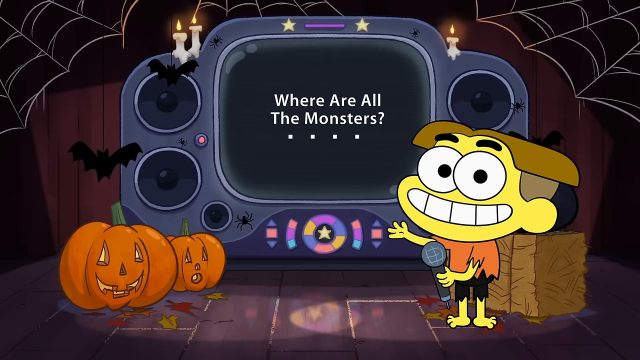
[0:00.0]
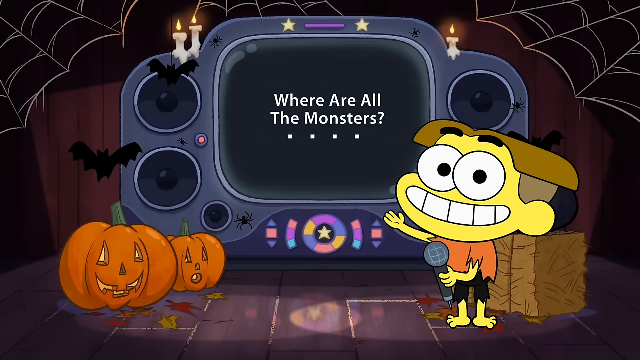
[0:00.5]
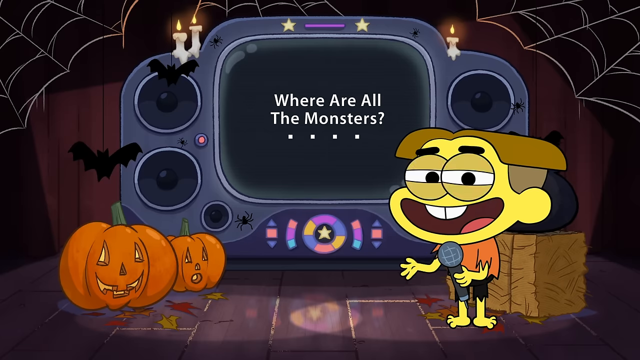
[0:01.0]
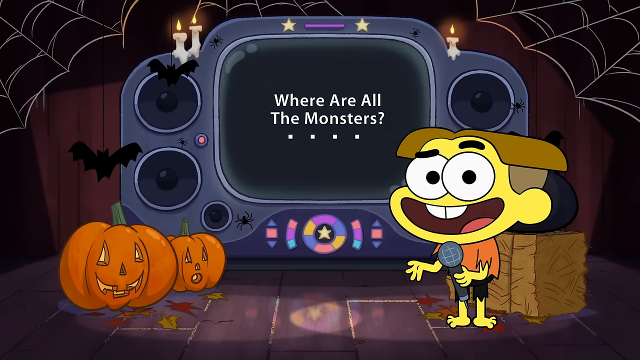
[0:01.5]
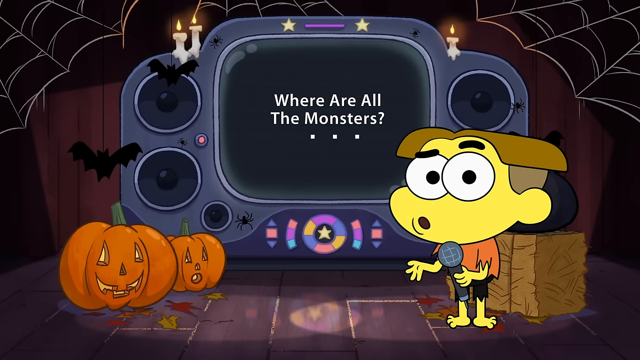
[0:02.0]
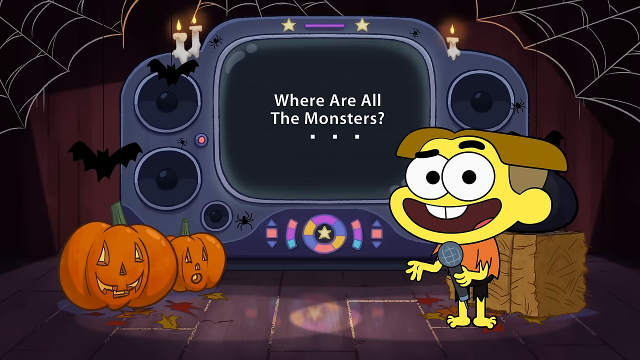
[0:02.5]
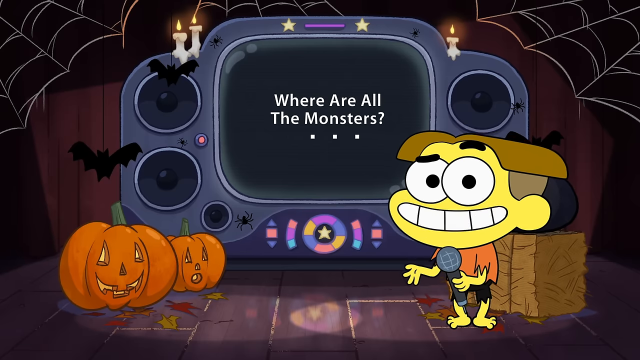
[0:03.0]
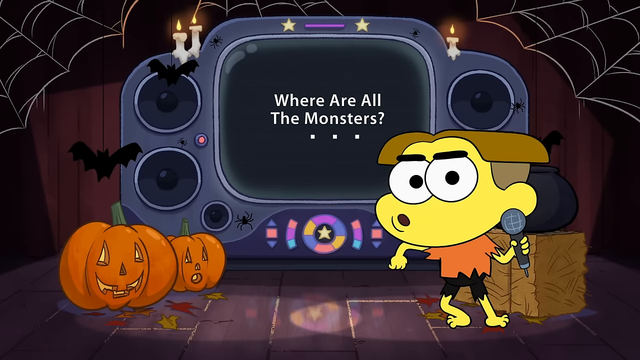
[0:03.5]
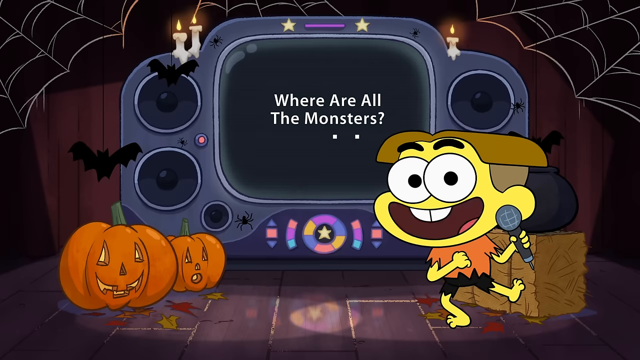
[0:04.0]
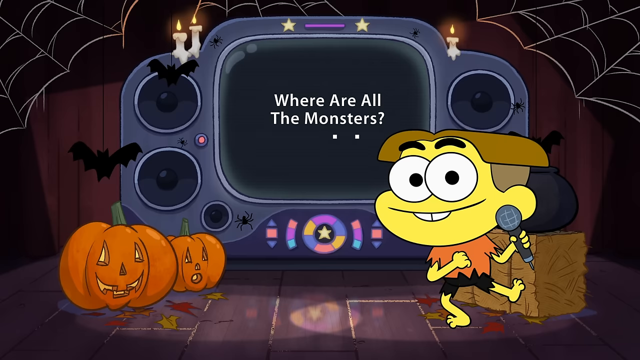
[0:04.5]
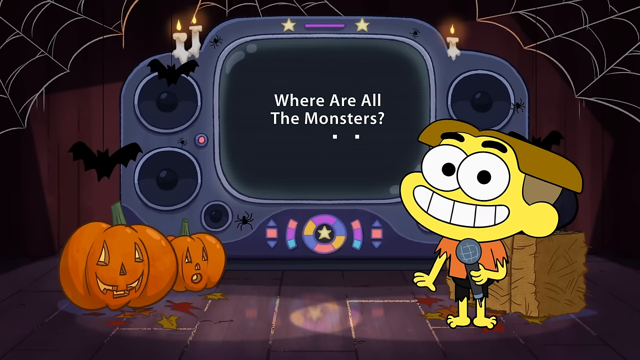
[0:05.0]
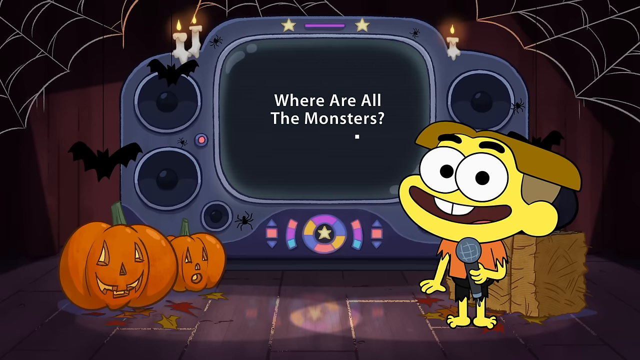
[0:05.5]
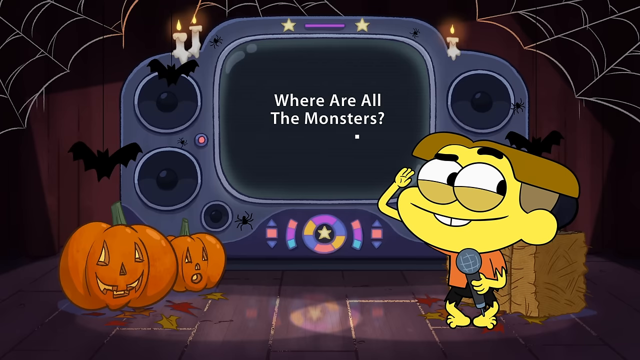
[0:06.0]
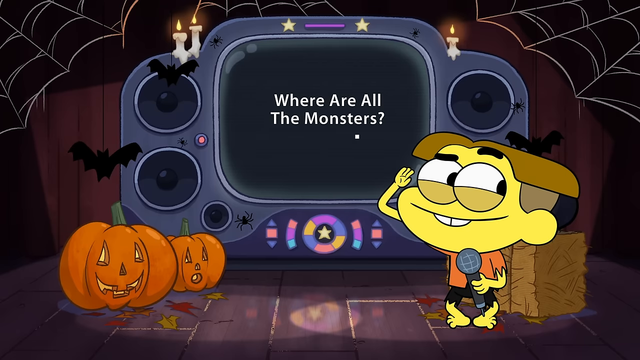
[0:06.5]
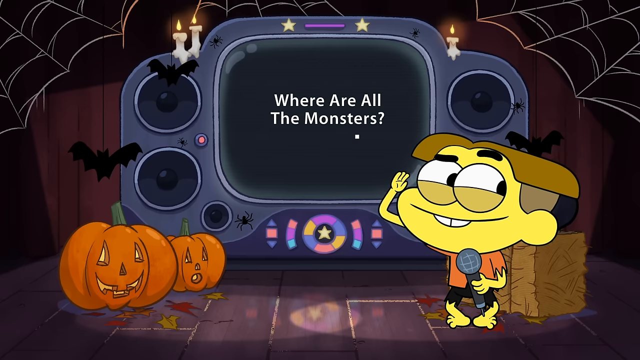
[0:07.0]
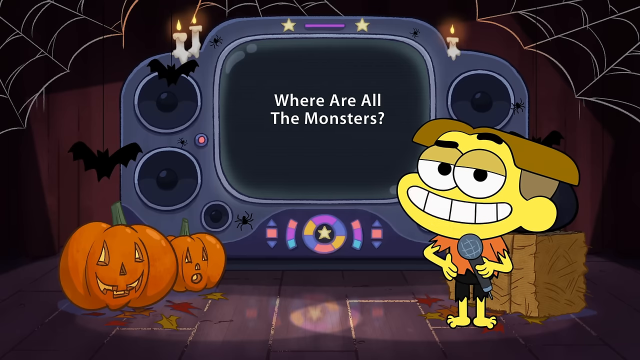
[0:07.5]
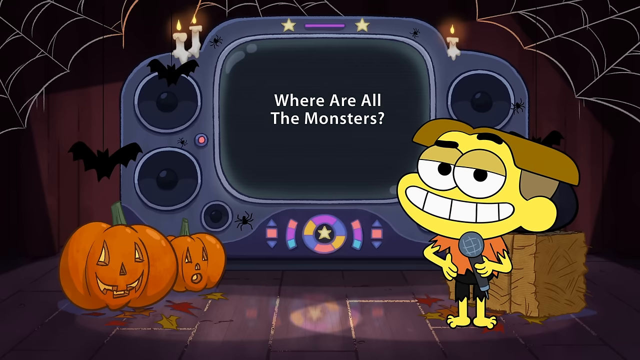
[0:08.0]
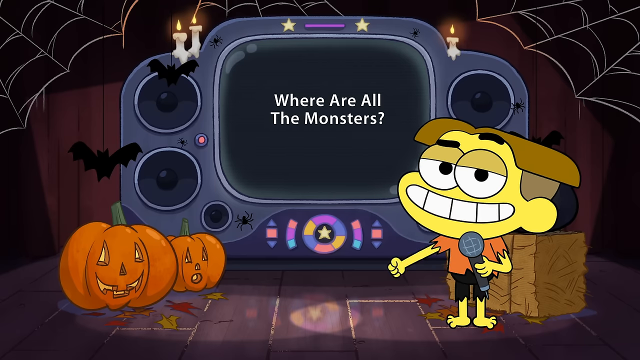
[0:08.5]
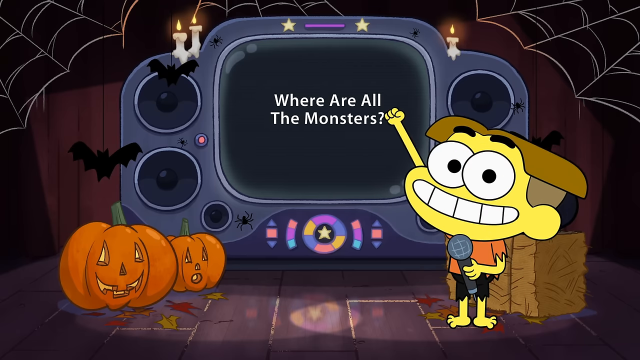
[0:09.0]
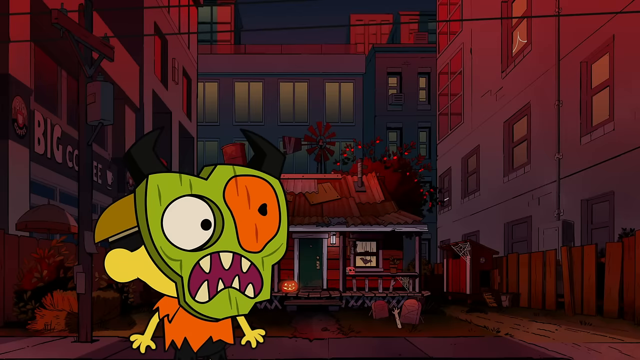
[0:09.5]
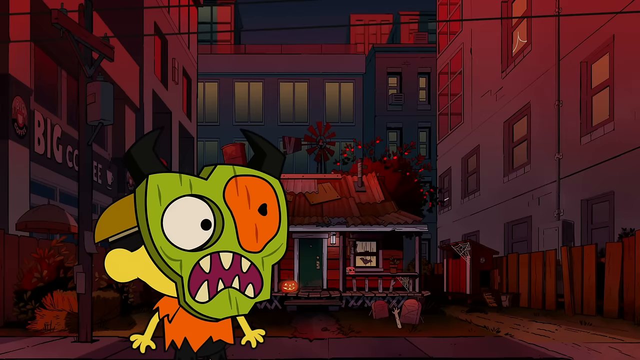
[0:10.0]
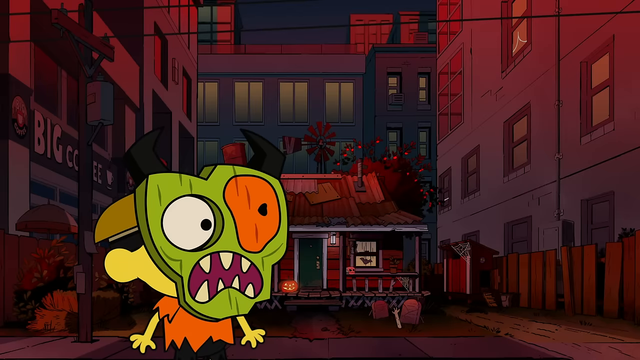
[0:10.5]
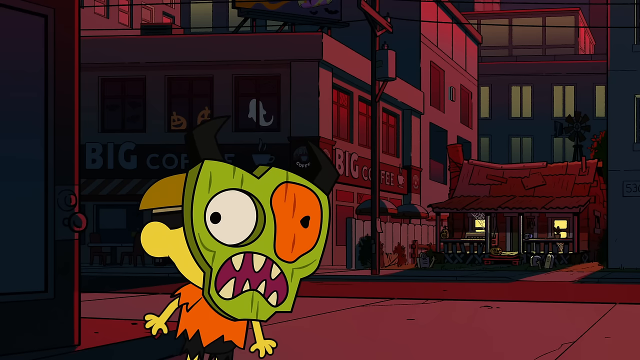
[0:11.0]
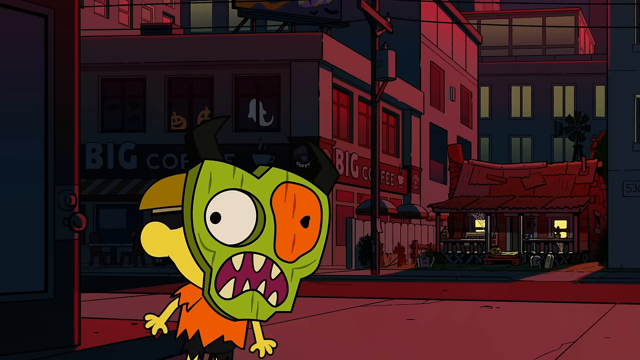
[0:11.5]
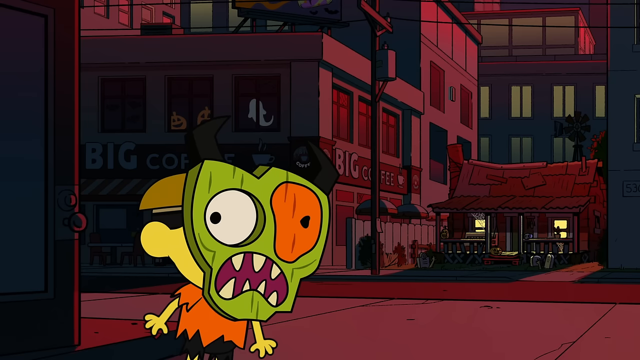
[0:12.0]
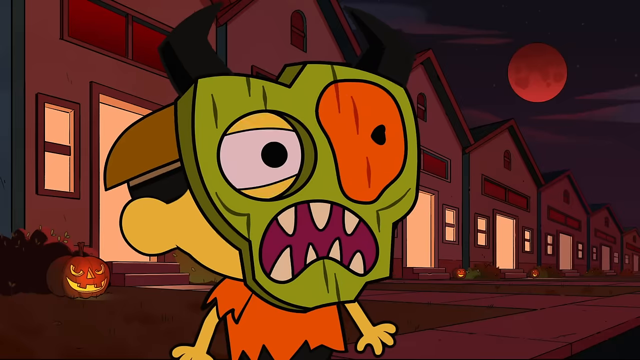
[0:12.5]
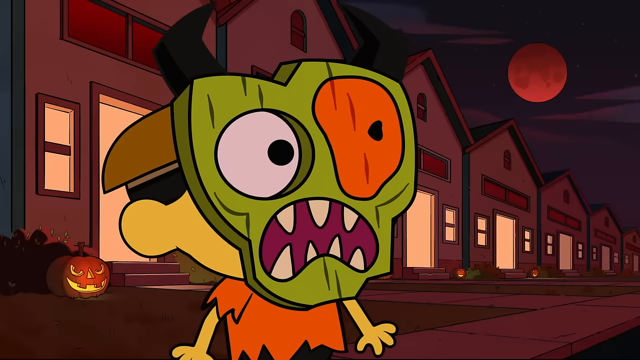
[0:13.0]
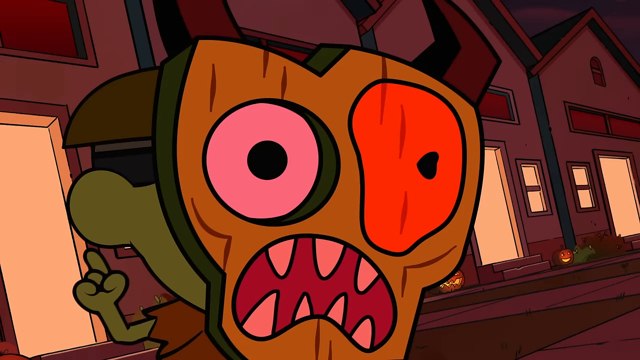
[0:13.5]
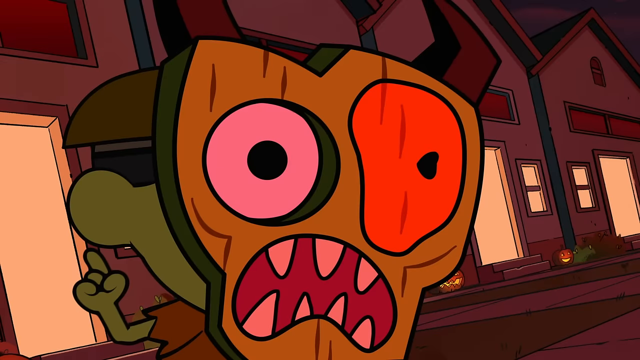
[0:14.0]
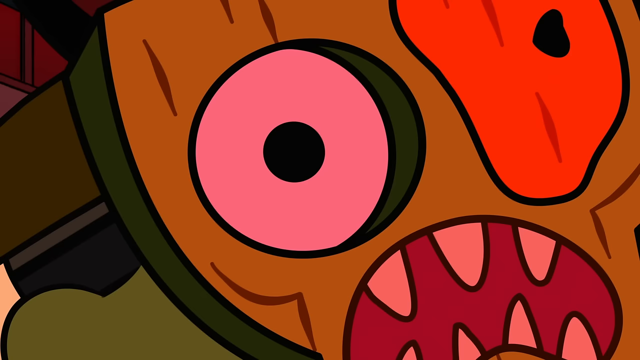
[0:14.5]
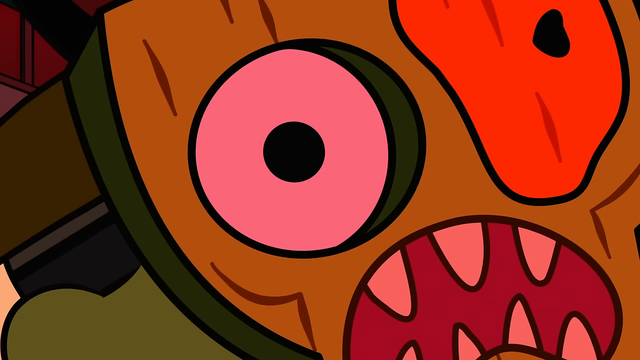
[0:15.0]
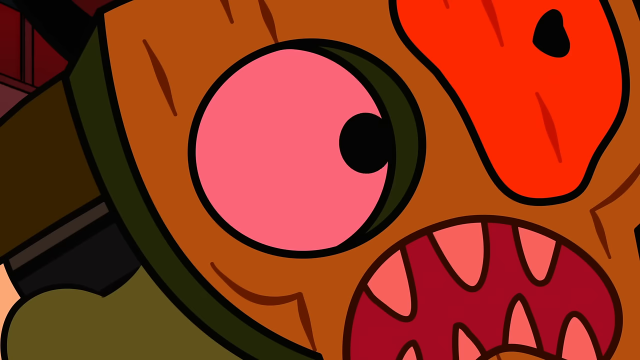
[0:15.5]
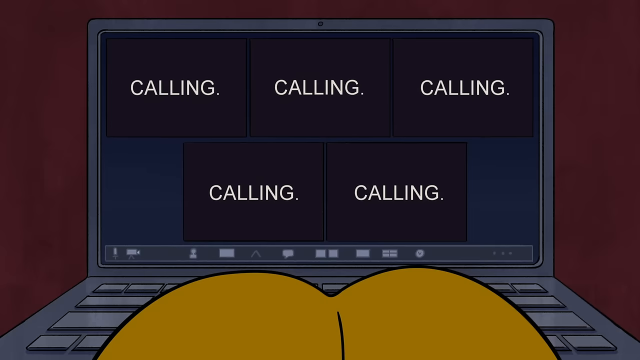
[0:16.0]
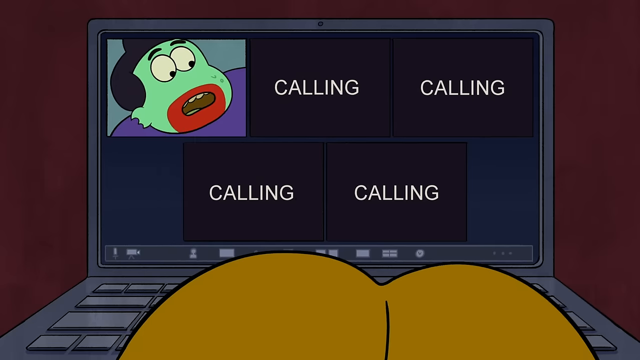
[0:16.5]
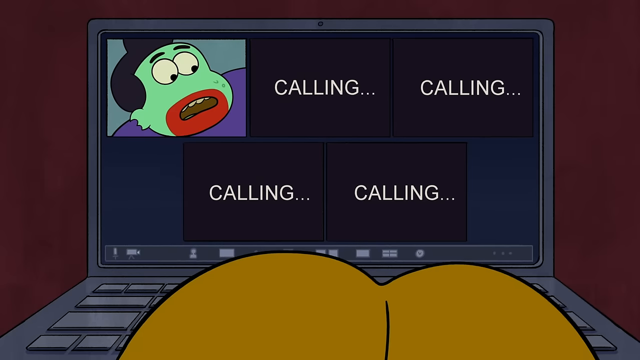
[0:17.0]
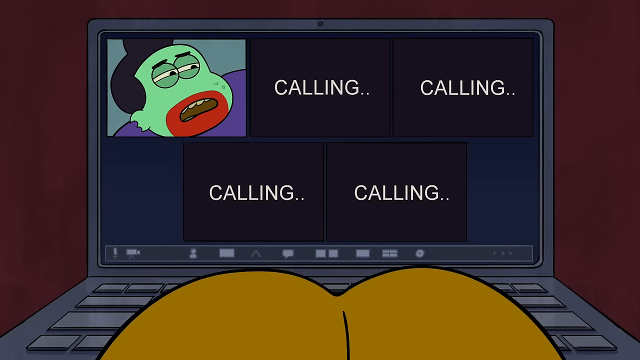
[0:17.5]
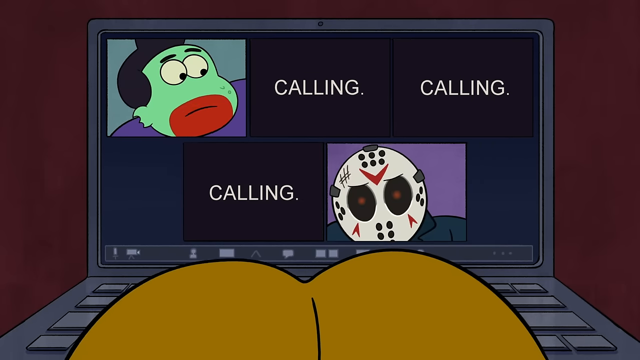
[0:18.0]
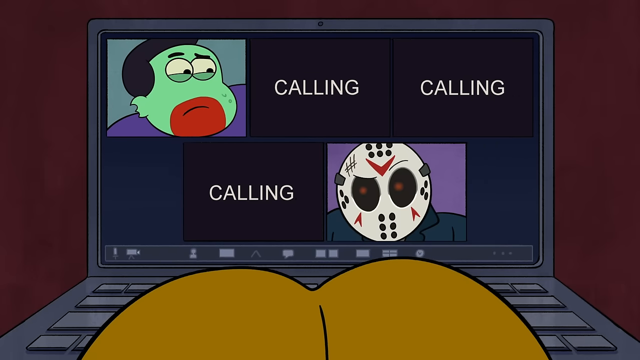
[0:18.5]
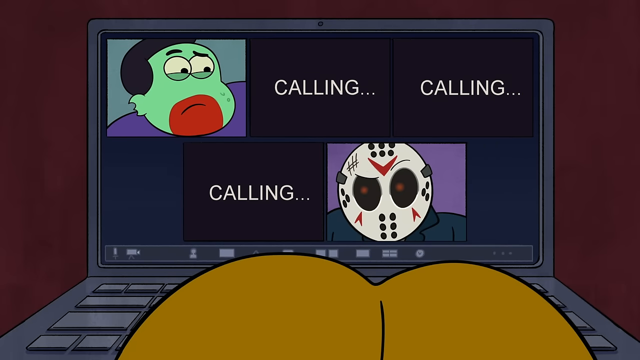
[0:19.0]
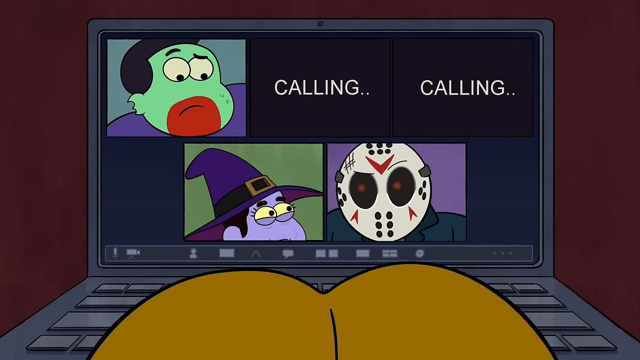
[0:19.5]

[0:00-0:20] A cartoon character on the right has yellow skin and holds a microphone in his left hand. He wears a tattered orange t-shirt and tattered black pants, and looks like he might be dressed as Frankenstein for Halloween. Some pumpkins are on the bottom left, a bat is on the middle left, and cobwebs or spider webs come from the corners. In the middle of the screen is what looks like a big boom box or possibly a karaoke machine, with the text "where are all the monsters" on it. The boy appears to be singing or talking into the microphone; he looks very happy to be up there, and his eyes are very expressive. The scene cuts to him apparently trick-or-treating, wearing kind of a Frankenstein mask. He is on the street at nighttime with a big house behind him that he is possibly about to trick-or-treat at. He looks excited, and he can be seen blinking through the mask. He looks at the house across the street, and then he appears to get on a video chat with some other monsters.